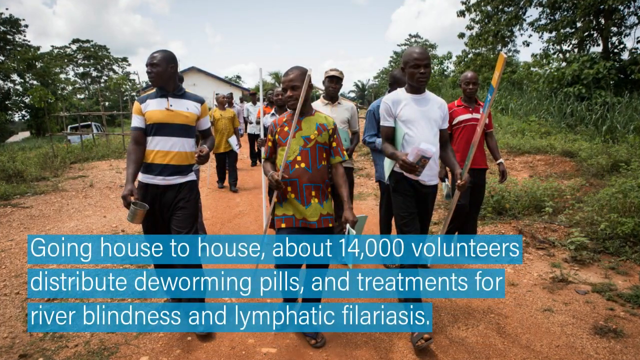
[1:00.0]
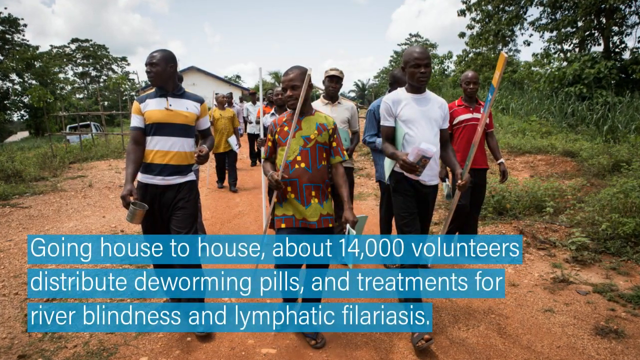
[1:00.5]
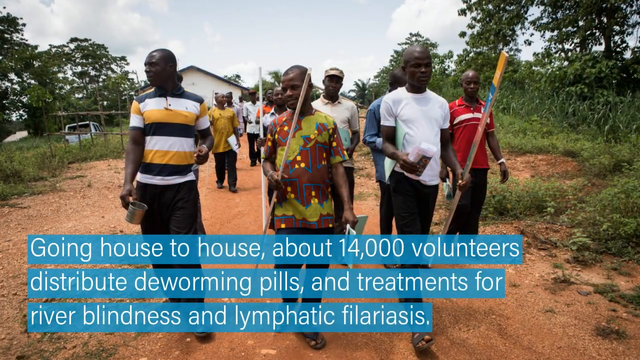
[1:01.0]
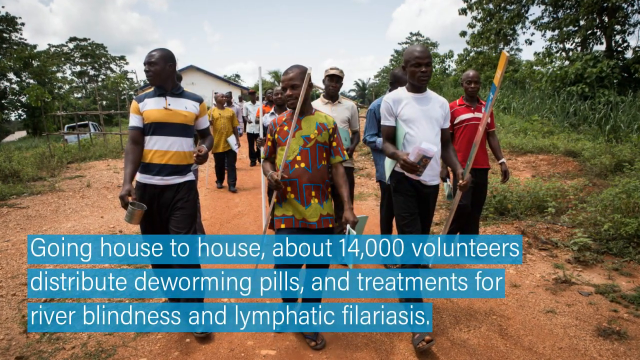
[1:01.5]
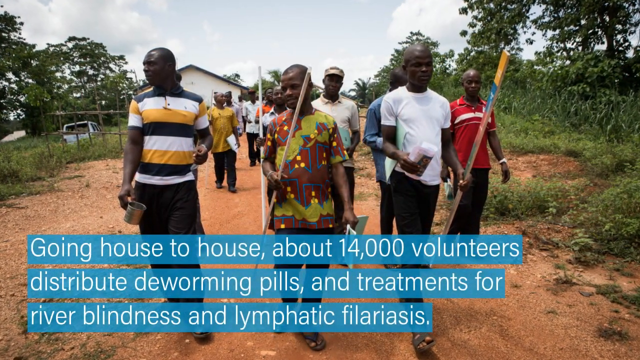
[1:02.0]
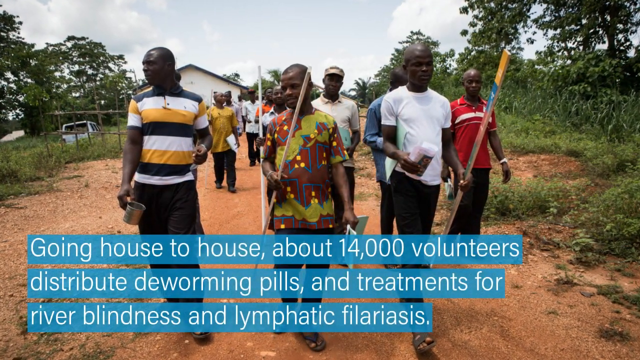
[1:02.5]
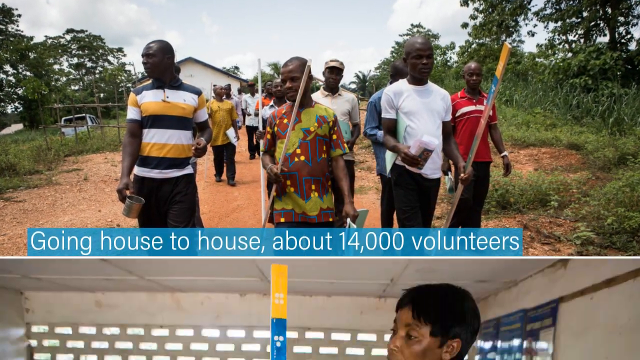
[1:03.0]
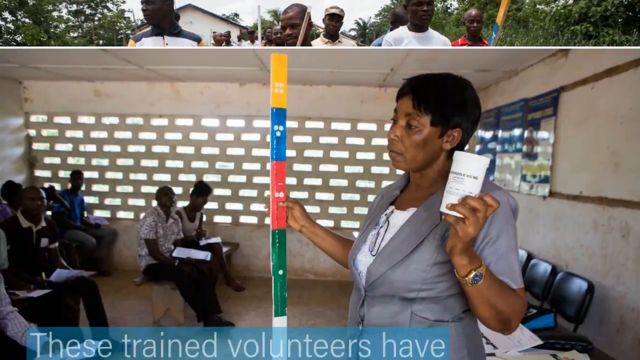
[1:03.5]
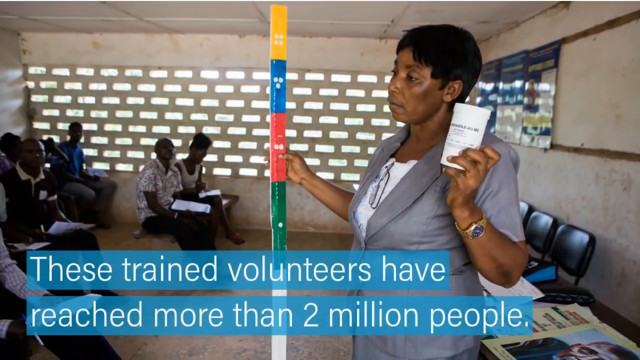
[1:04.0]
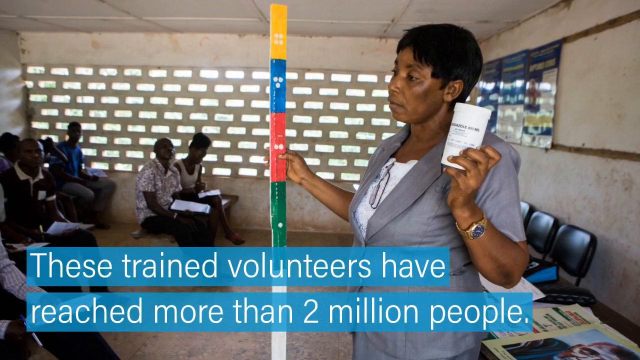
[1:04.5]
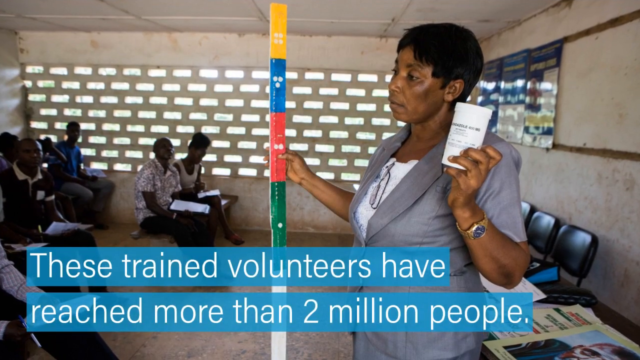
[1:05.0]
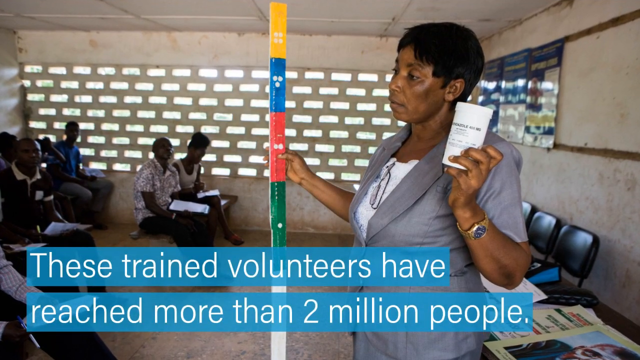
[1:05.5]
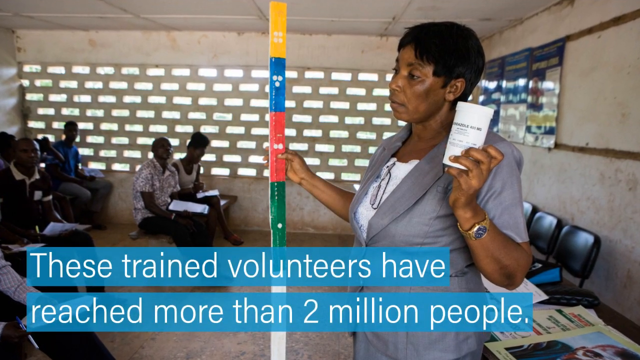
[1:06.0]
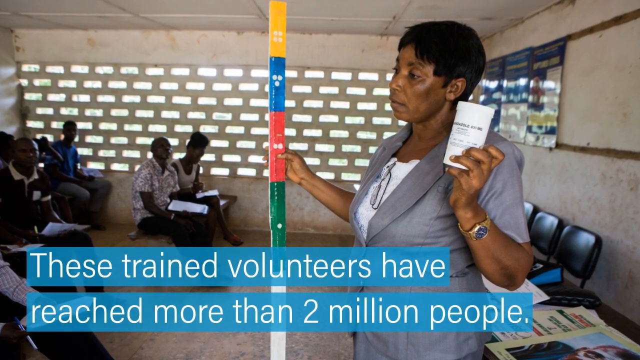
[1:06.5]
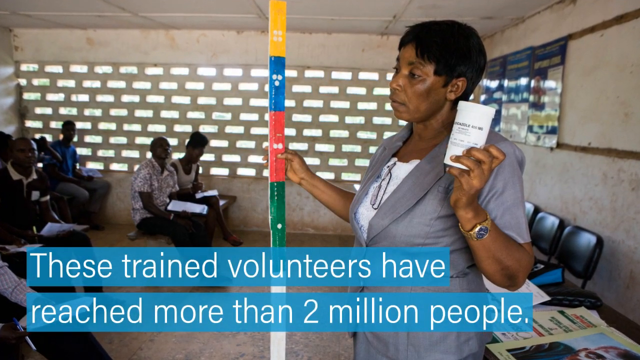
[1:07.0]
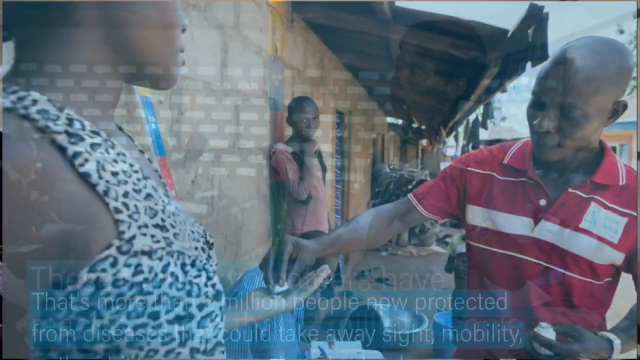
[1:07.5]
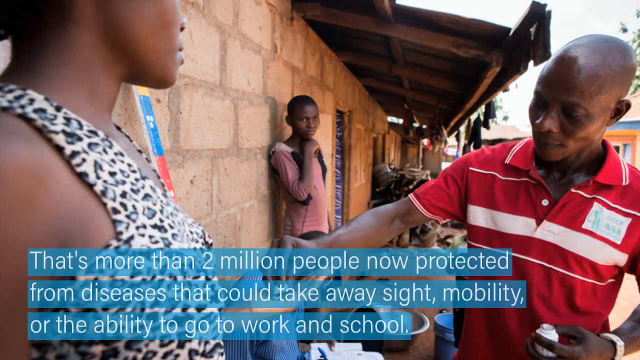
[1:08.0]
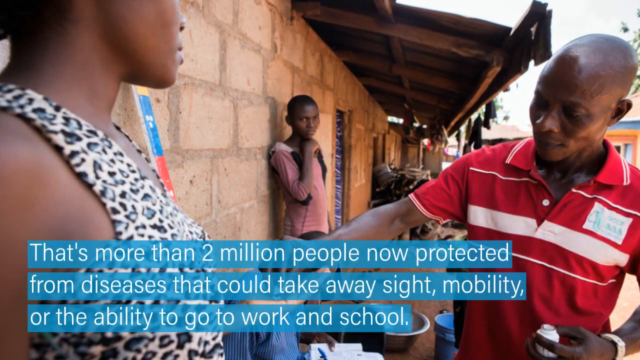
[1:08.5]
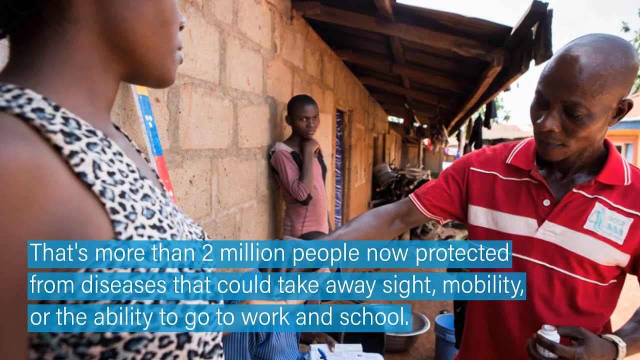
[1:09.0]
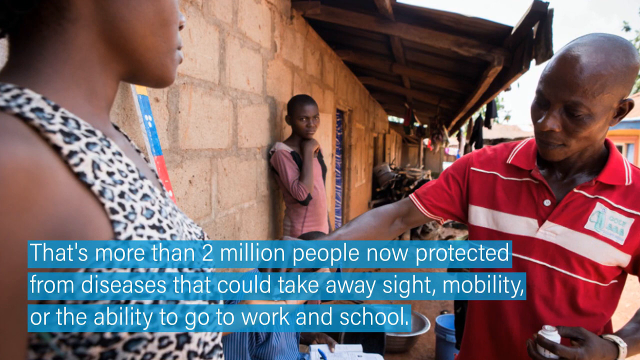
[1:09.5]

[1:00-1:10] The photograph is an outdoor view of a bunch of adults, maybe a dozen or so, in various layers. They are not lined up but kind of walking toward the camera on an outdoor dirt path, in various multicolored shirts, in Africa. The text refers to 14,000 volunteers distributing deworming pills, and the view slowly fades in on the image. The next screen is indoors, in some kind of meeting house. A woman on the right of the screen is seen from the waist up. In her right hand she has what looks like the tall yardstick used to measure heights, multicolored in sections of green, red, blue and yellow. In her left hand she holds up what looks like a plastic bottle that might contain the pills. An audience sits on the left of the screen. The text refers to trained volunteers, and she is one of them. Another scene is set against a one-story building with a brick facade on the left, outdoors. The man in the red polo shirt, apparently the same man seen earlier, is reaching over, and a woman leans against the wall with the yardstick to her left. The text below says "that's more than two million people now protected from diseases..." and continues at length.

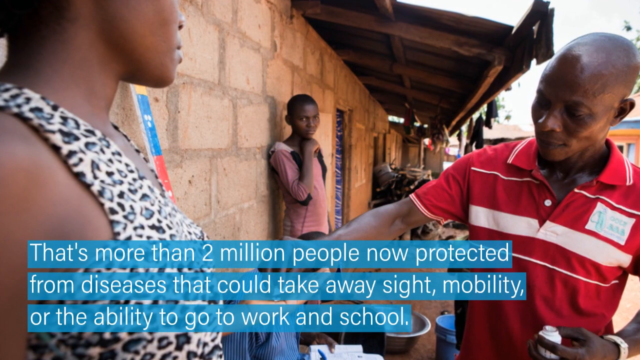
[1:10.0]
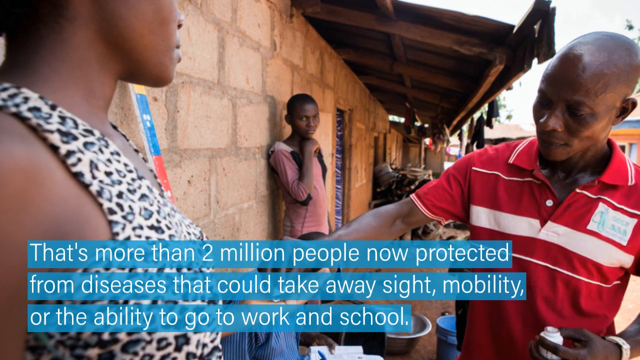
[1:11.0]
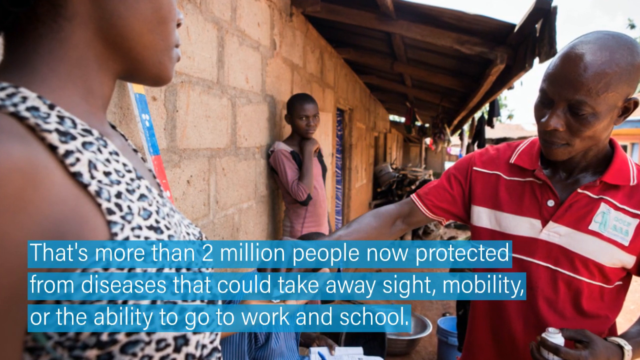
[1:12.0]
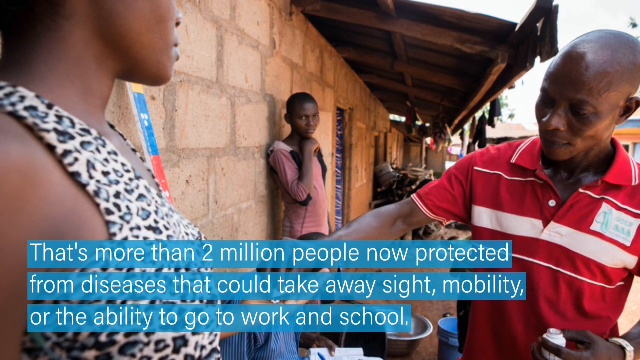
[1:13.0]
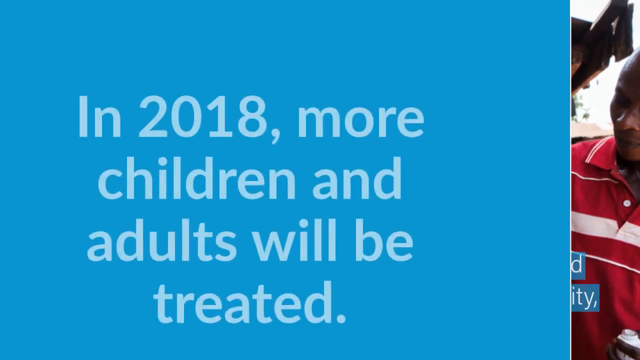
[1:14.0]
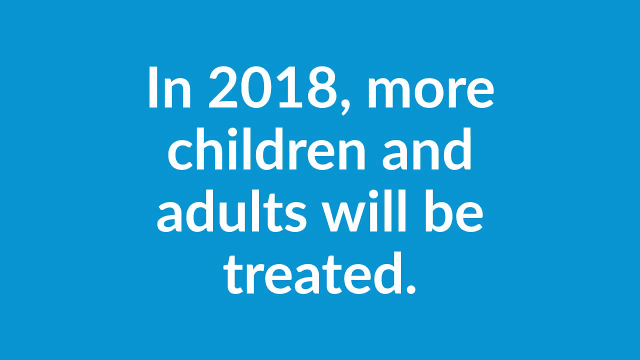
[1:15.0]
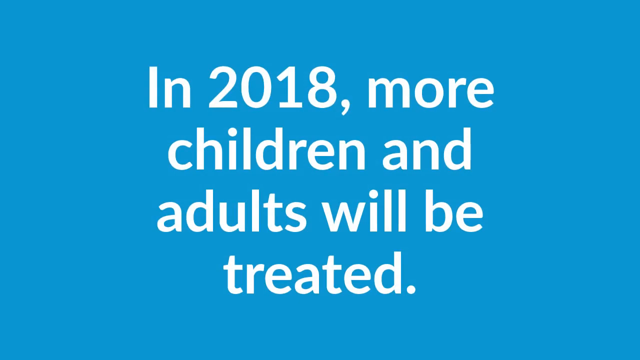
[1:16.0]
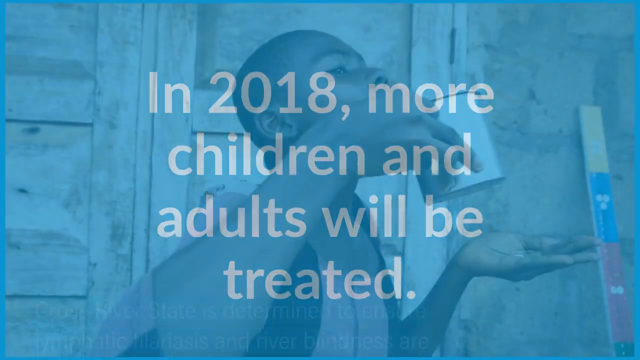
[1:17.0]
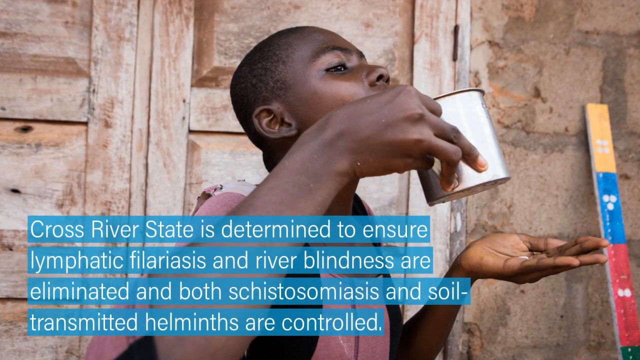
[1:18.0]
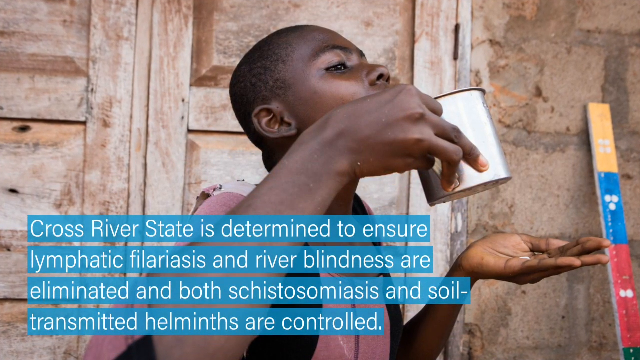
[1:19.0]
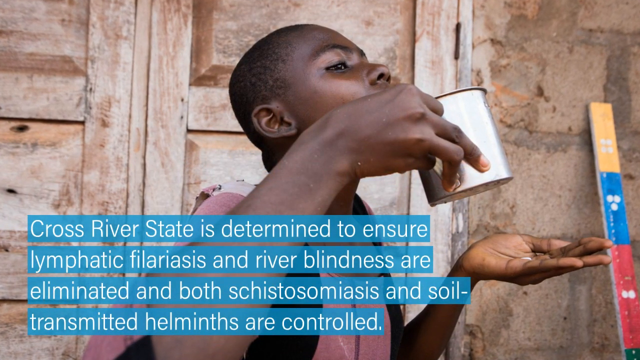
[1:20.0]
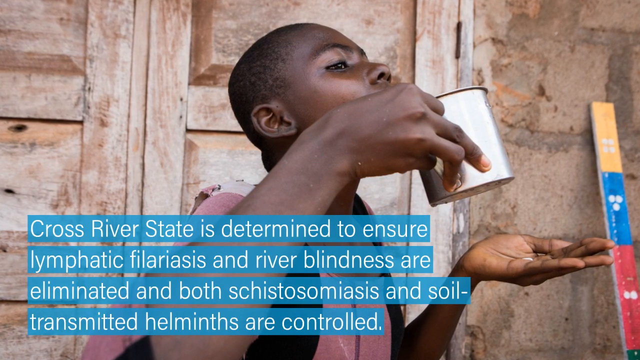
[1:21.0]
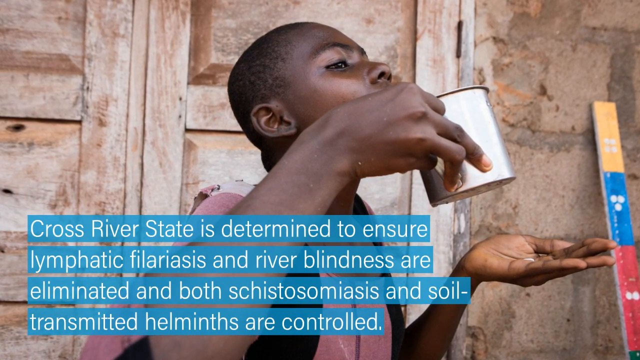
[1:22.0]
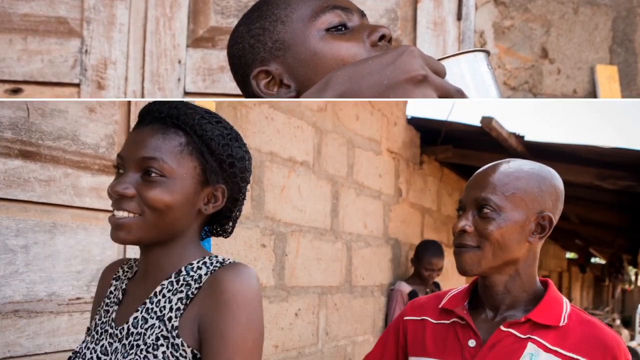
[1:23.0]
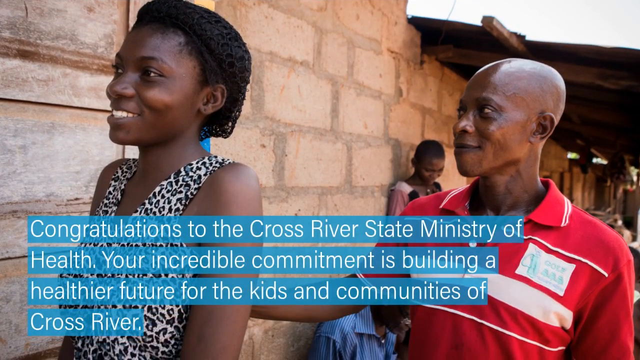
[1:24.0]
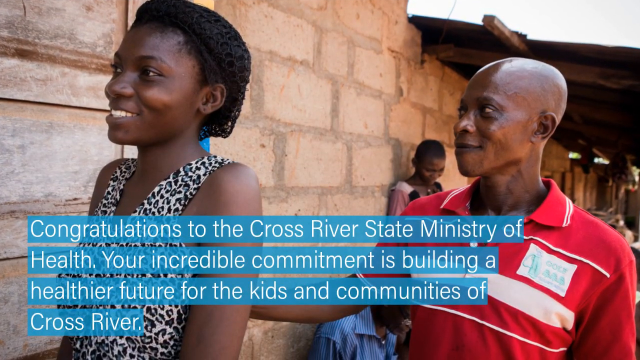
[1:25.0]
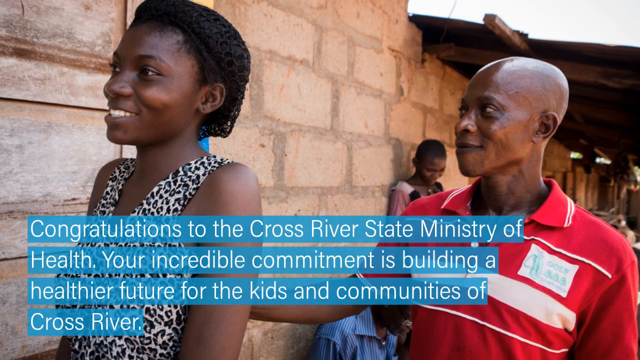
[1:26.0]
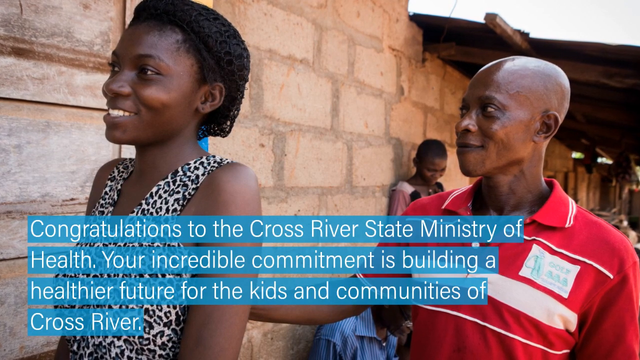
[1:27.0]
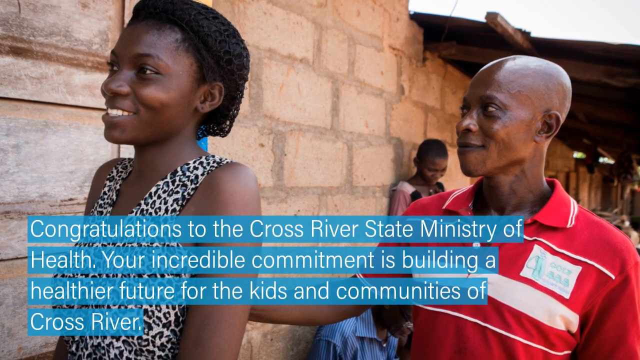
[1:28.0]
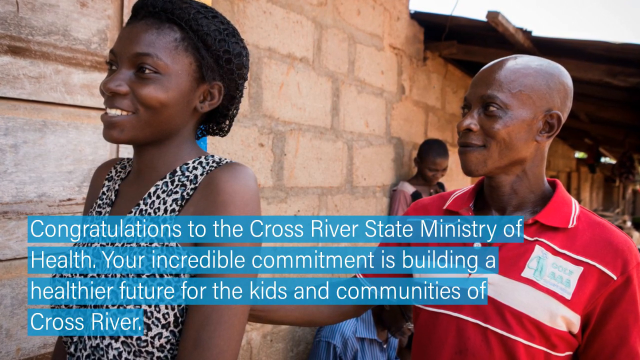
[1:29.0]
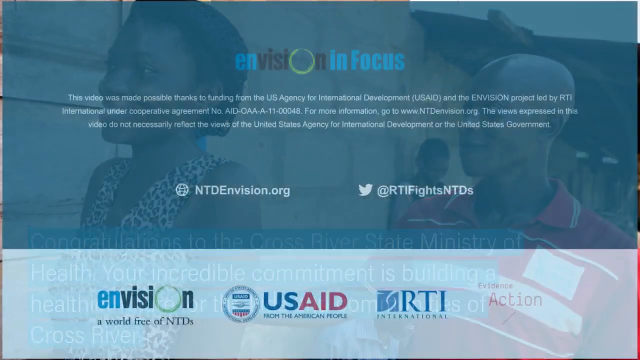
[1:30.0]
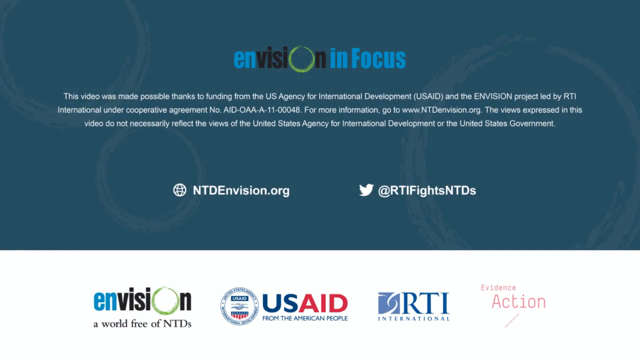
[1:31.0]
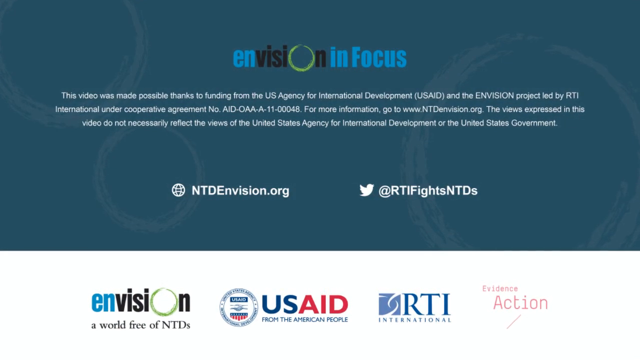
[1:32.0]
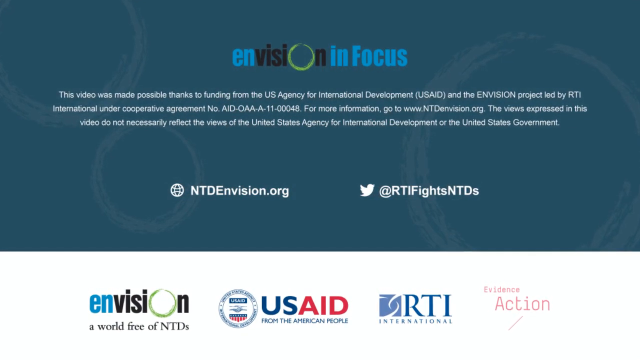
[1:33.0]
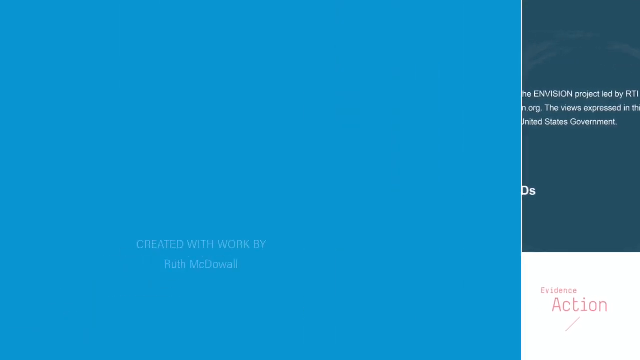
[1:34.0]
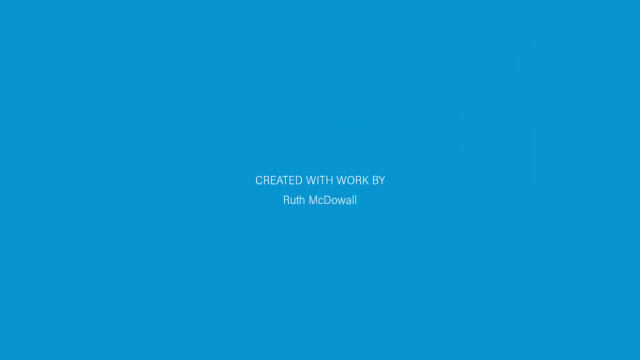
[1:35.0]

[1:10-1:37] The same still image of the man continues; he is bald and wears the cherry red shirt with white stripes. It changes to another of the blue screens, which pulls out from the left like one slide being pulled over another. On a light blue background, white text across four lines says "In 2018, more children and adults will be treated". It holds for a second, then fades to a new screen: an outdoor image of someone standing in front of a building, with some brick visible on the side and a wooden door. The person, seen from the chest up, appears to hold a metal cup near their mouth and a pill in their left hand. The text at the bottom says "Cross River State is determined to ensure lymphatic filariasis and river blindness are eliminated..." and continues for about two more lines. The yardstick for measuring height is visible on the right; its top section is yellow, with blue below that and red below that. The view fades in very slowly. The next photograph pulls up from the bottom of the screen: the man in the cherry red polo shirt is on the right, smiling at a woman in front of him whose back is to him; she looks off to the left of the screen and smiles. Both are seen from more or less the waist up, in front of a brick building with a wooden door on the left, and the text congratulates the Cross River State Ministry of Health. The final closing screen is purely digital: at the top is "Envision in Focus" in the same logo as at the beginning, followed by three lines of small white text thanking USAID, on a blue background, with a couple of other logos across the bottom. Finally, a light blue screen pulls out from the right with small white text reading "Created with Work by" and, on a new line, "Ruth McDowall".